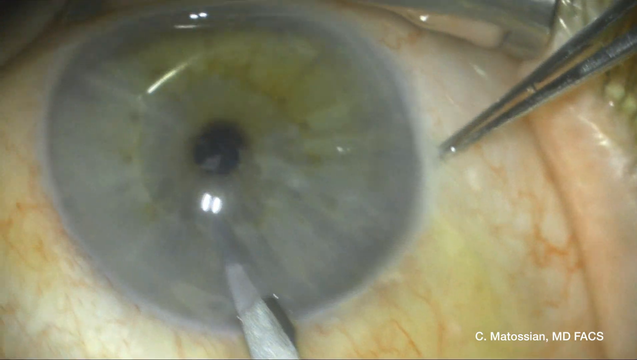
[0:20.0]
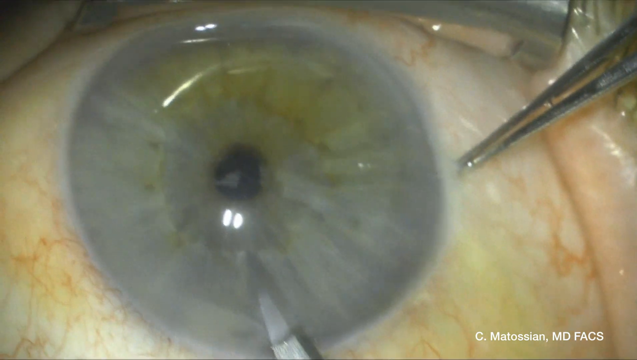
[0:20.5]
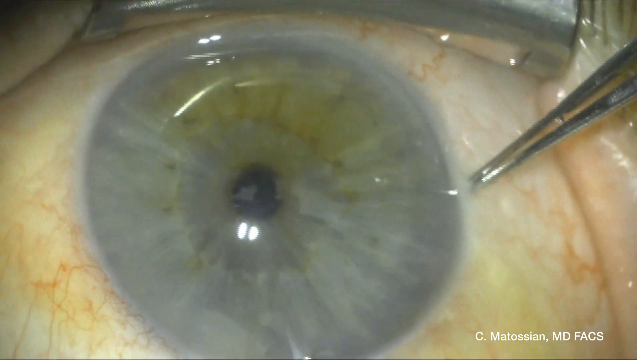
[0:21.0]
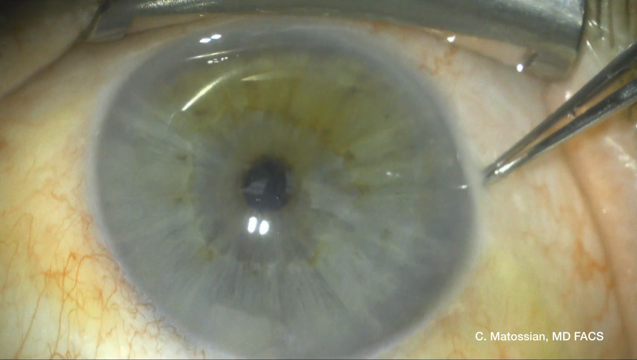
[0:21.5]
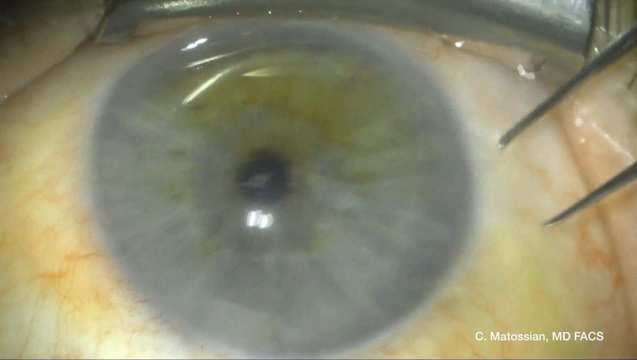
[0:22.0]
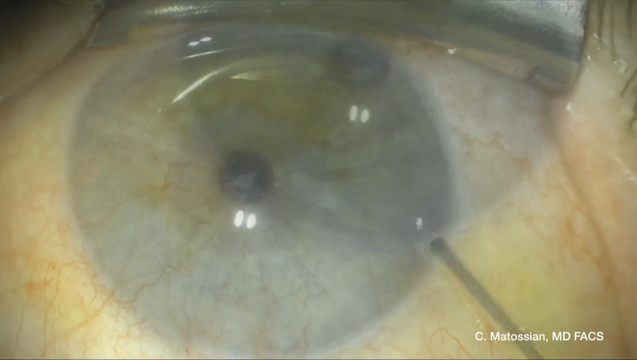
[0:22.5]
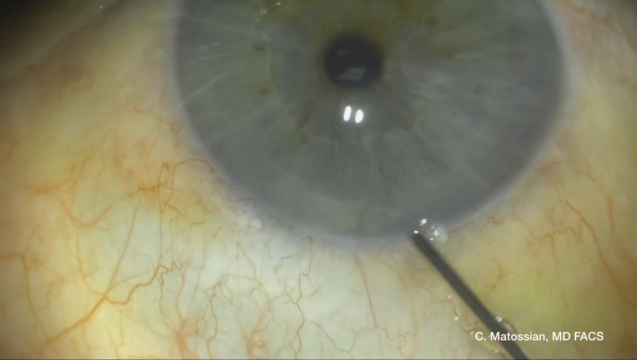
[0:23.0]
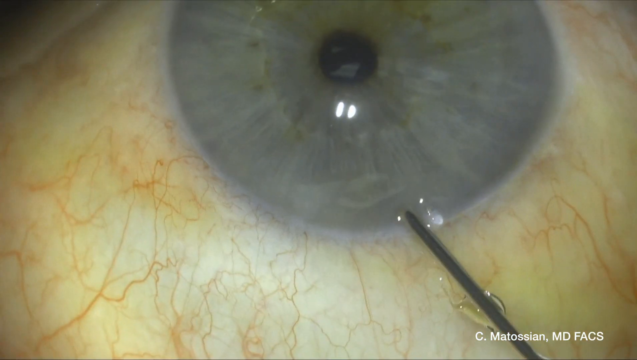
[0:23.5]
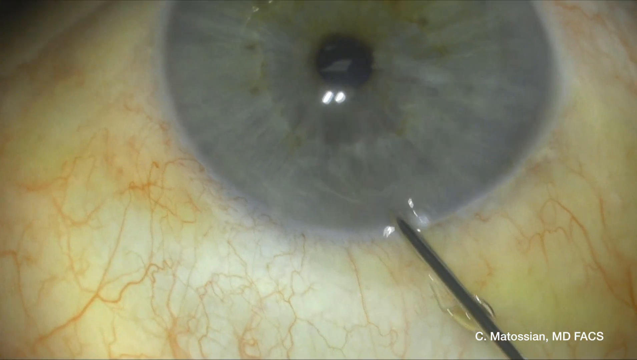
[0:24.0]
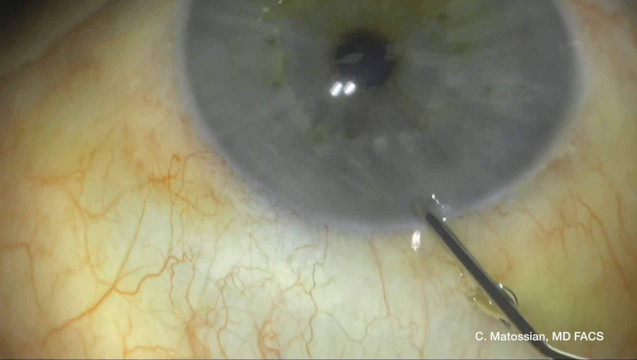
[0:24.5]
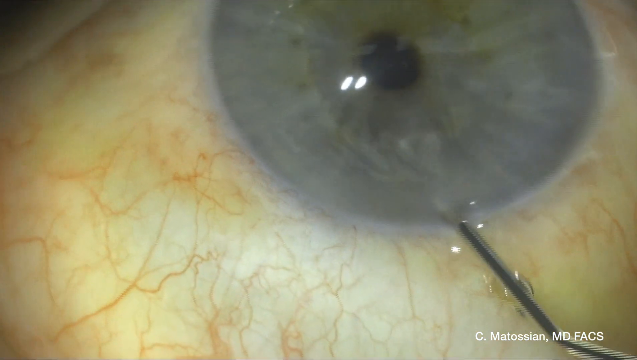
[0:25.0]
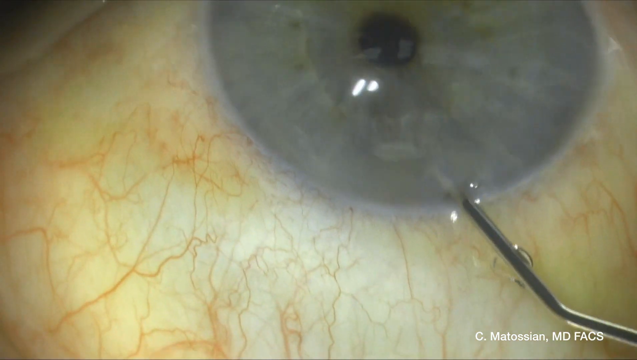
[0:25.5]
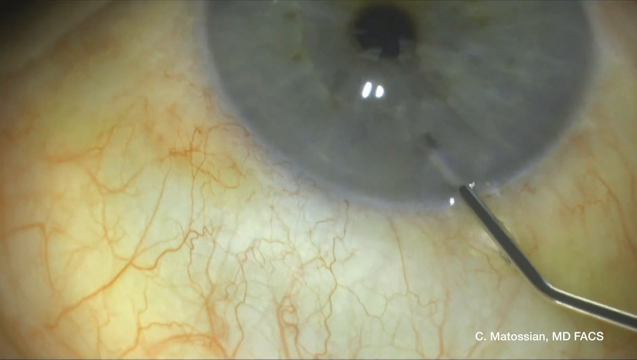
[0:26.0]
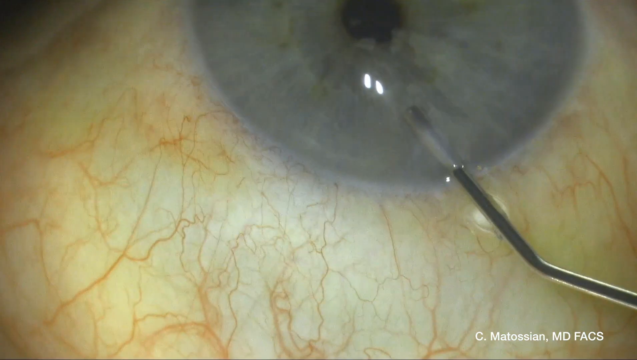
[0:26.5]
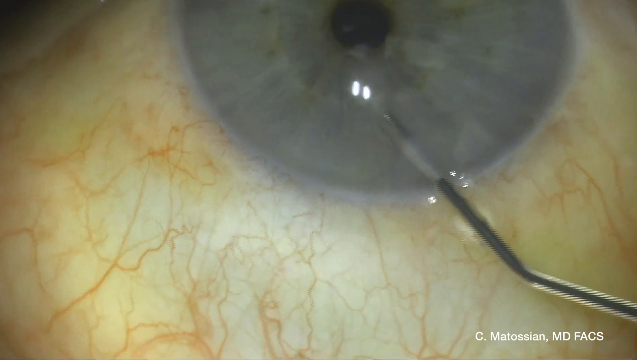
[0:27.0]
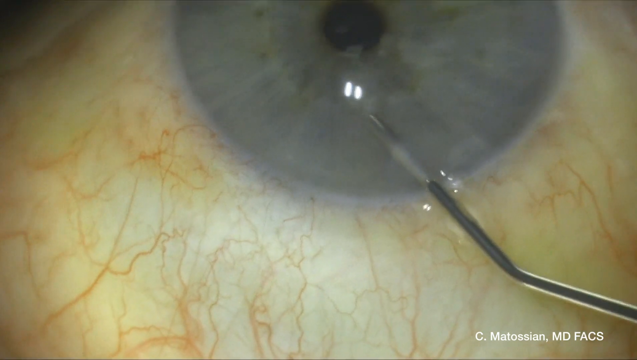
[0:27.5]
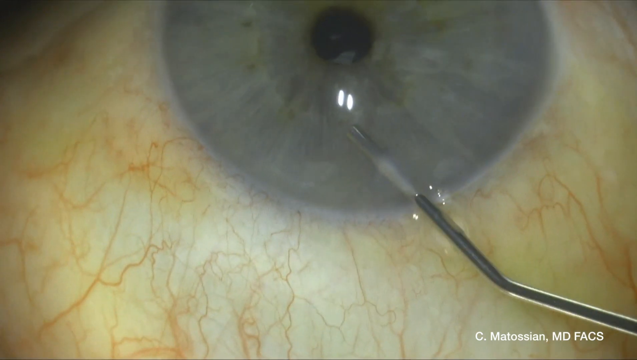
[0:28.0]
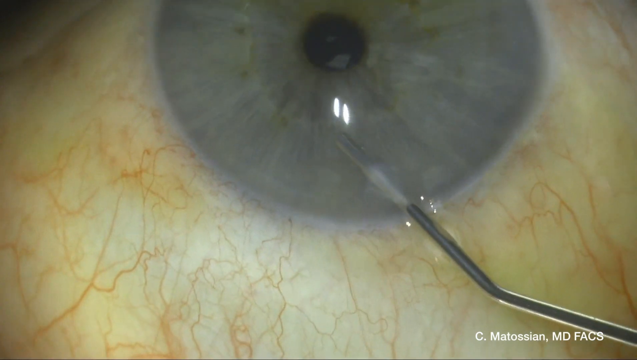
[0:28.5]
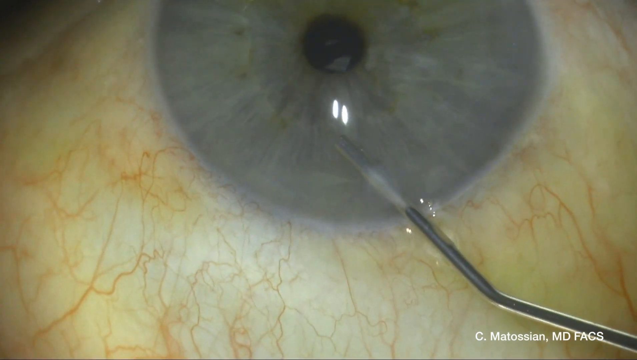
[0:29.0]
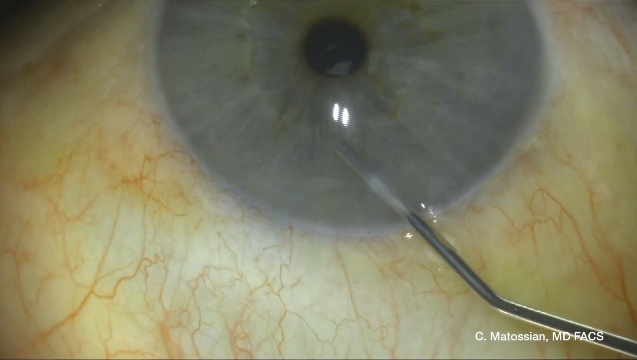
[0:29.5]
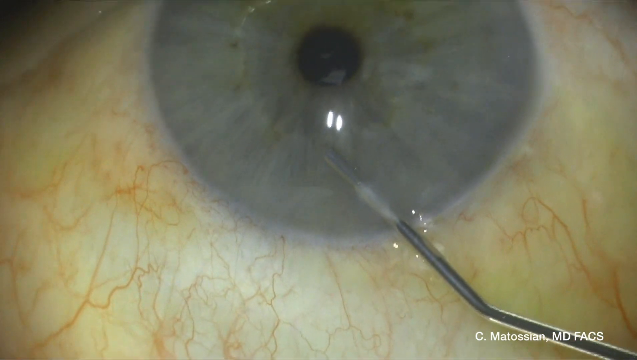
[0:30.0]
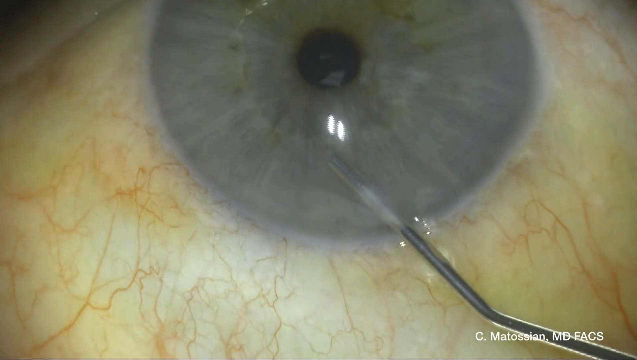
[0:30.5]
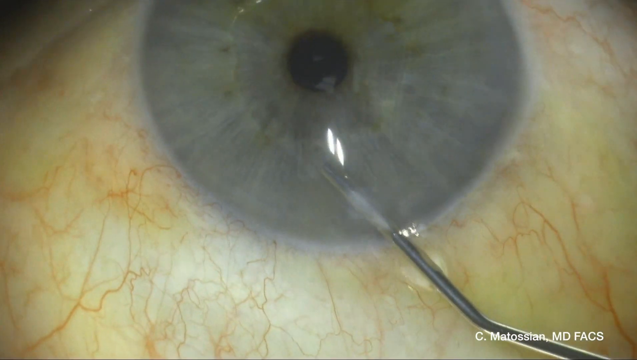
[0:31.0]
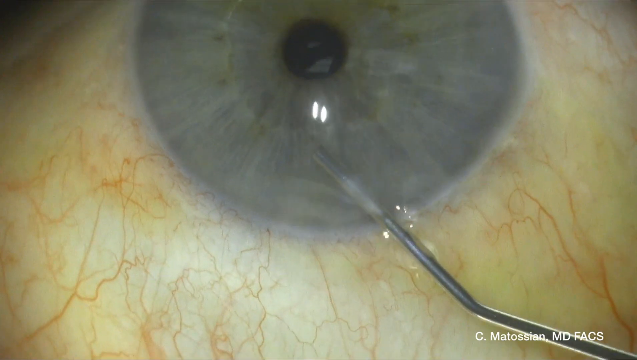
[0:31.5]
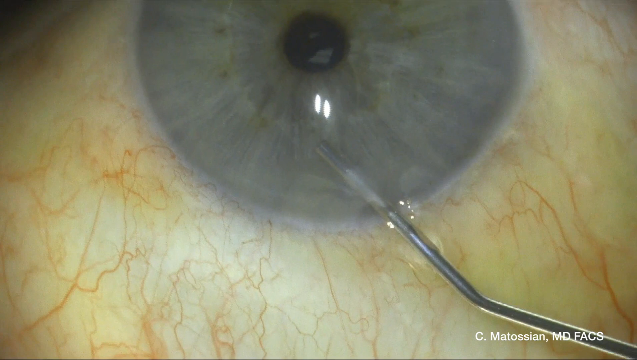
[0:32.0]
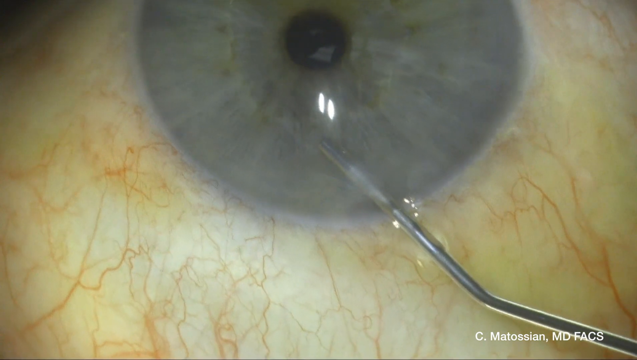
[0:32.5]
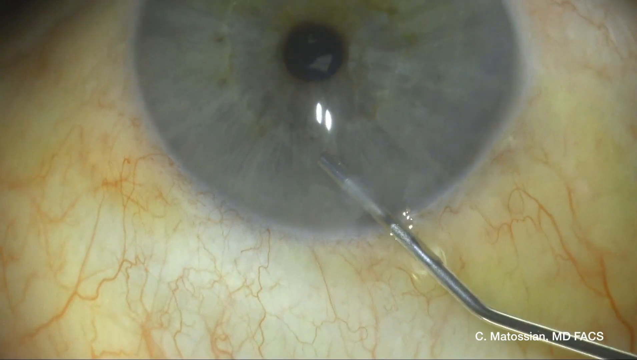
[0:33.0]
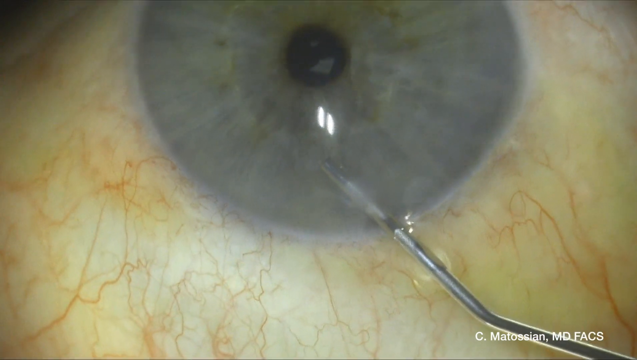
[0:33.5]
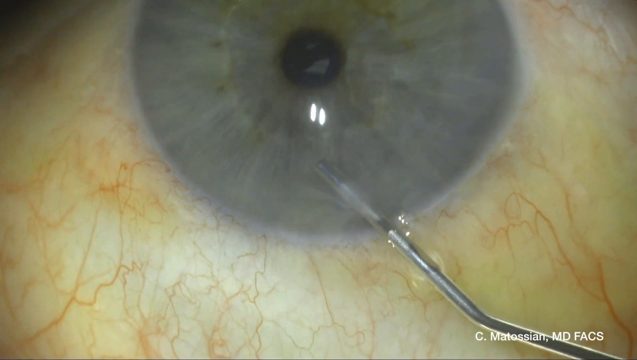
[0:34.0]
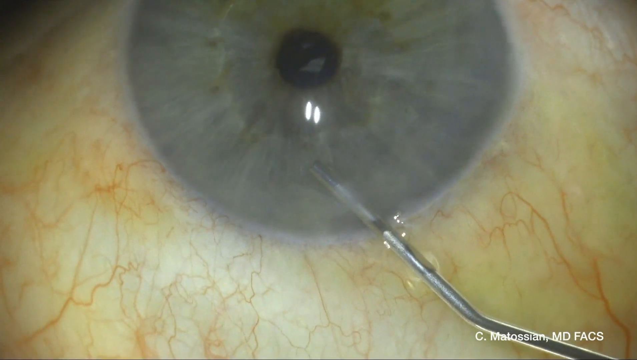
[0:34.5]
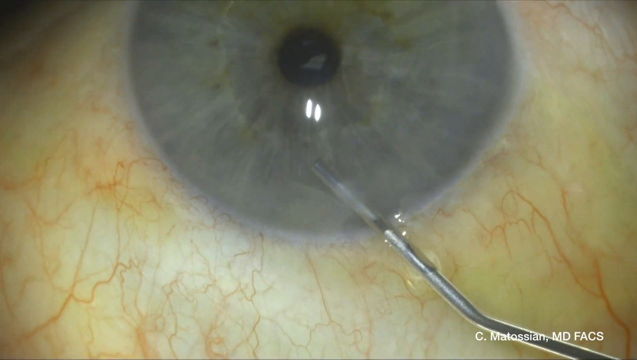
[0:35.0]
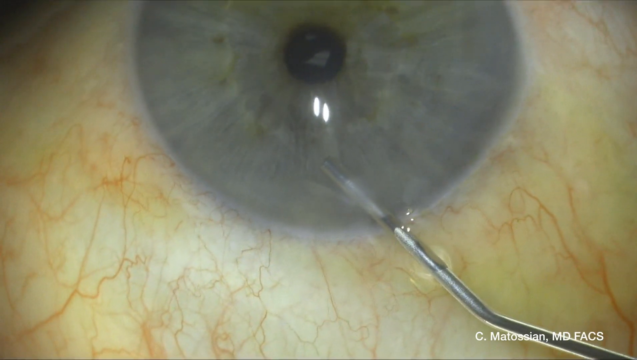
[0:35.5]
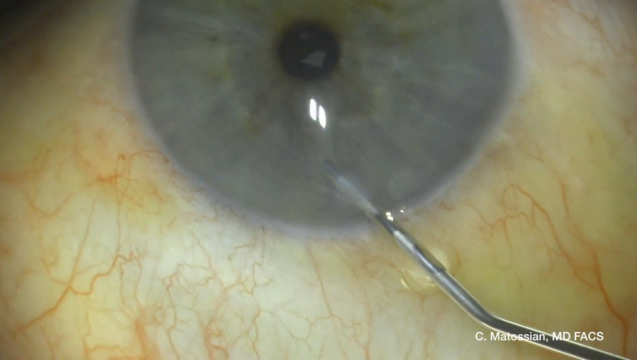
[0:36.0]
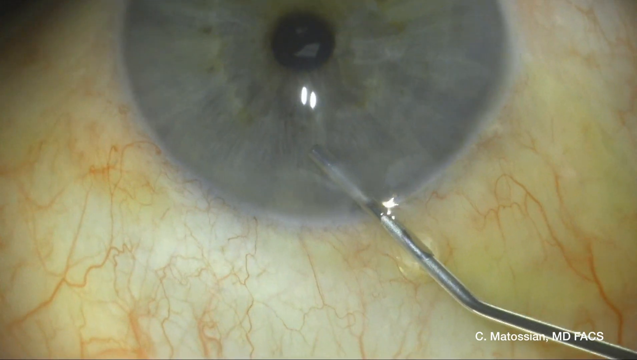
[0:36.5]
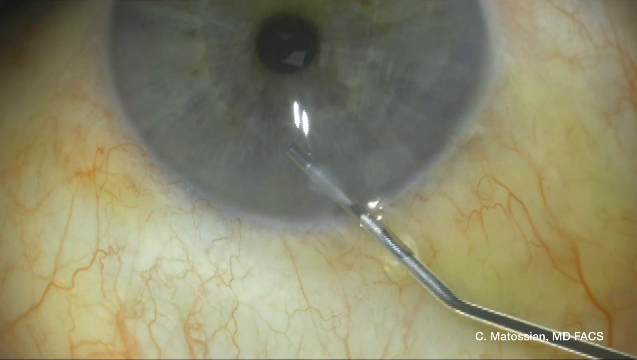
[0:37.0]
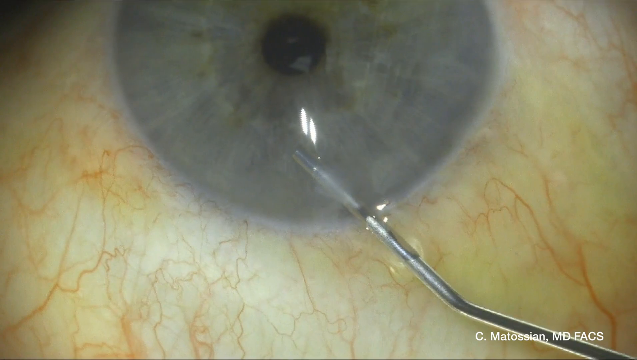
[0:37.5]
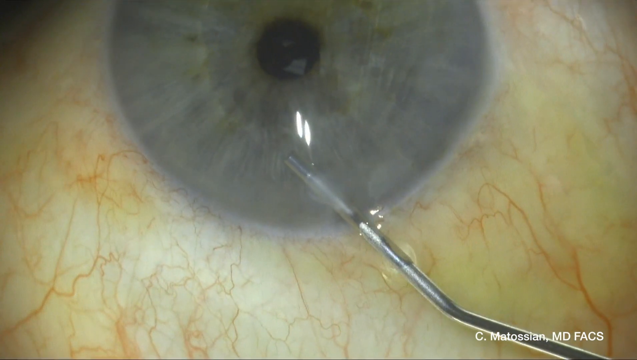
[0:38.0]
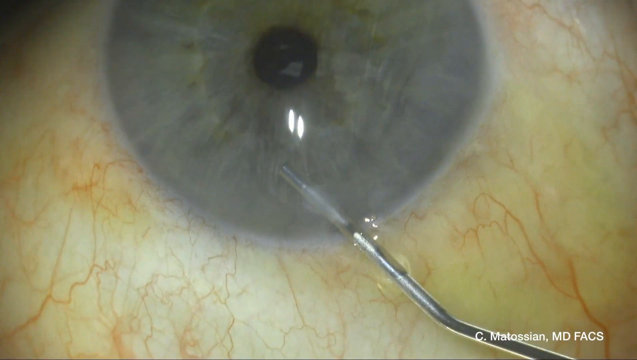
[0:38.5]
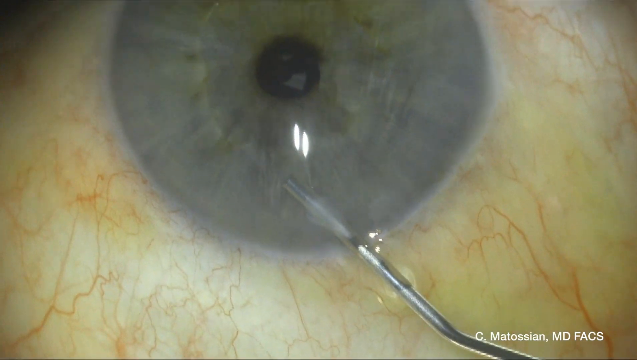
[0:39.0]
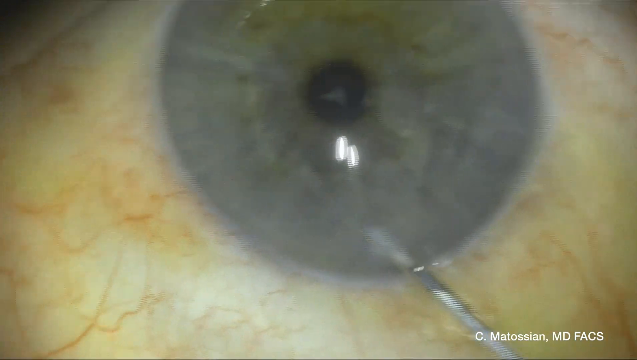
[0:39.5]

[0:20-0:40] A close-up shows an eye with a blue iris and a black pupil. A metal piece in the upper right part of the frame holds the eye open. On the right side, a pair of double-sided metal pliers or tools press slightly into the right side of the eye. At the bottom, in the white part of the eye, a metal point or tool presses into and inserts into the eye from the bottom of the blue part. The text "C. Matossian, MD FACS" is in the lower right corner. The pliers on the right open up and rise from the eye, and the video fades out and fades back in to a close-up of the eye with a single metallic tool being inserted under the eye and through the blue part. The tool comes out of the lower right corner of the frame, angles upward to the left, and then goes straight in toward the middle of the eye. The tool is pressed further into the eye.